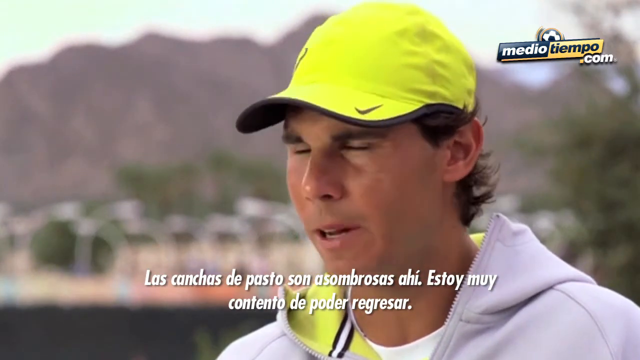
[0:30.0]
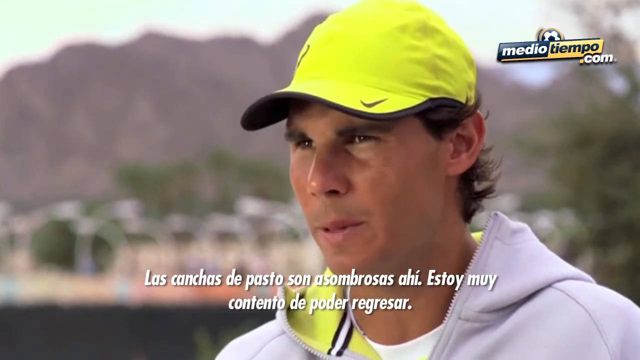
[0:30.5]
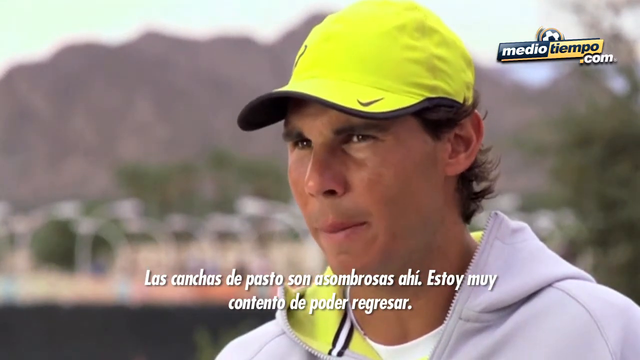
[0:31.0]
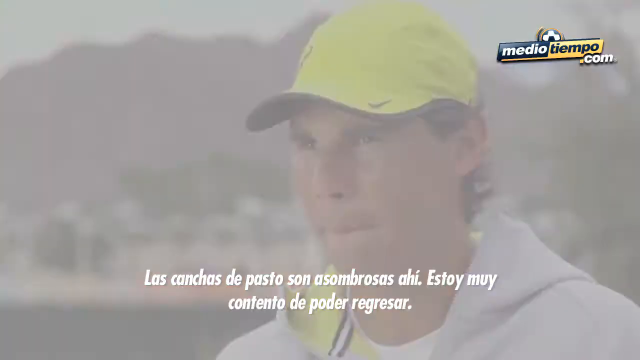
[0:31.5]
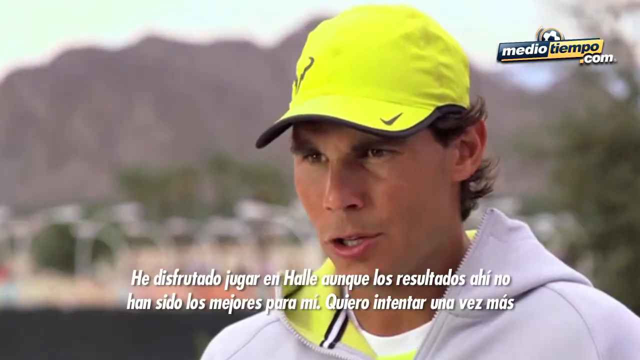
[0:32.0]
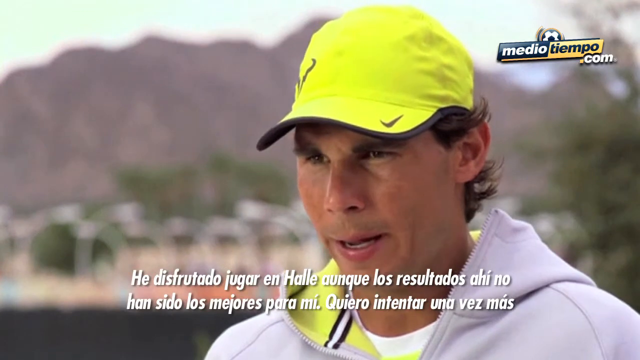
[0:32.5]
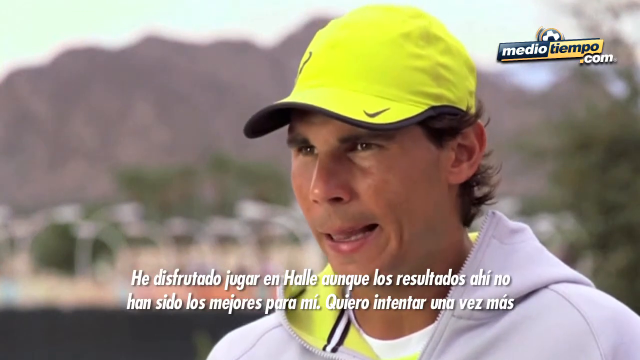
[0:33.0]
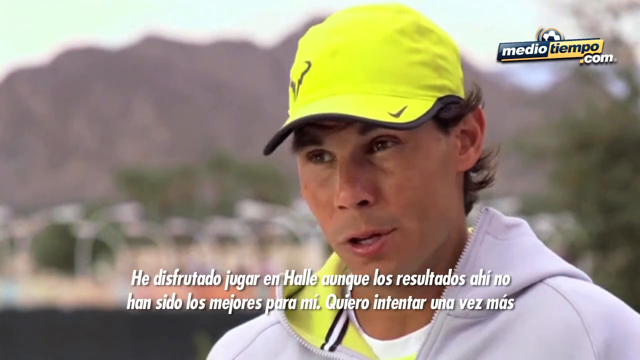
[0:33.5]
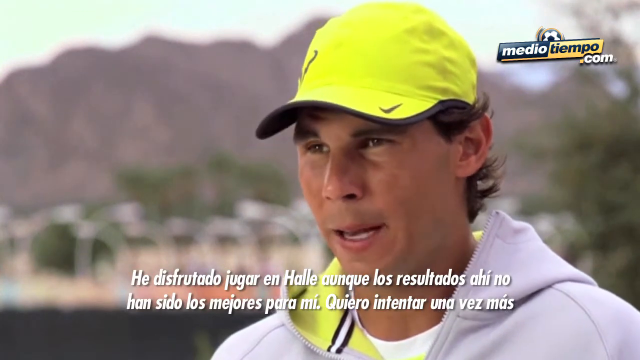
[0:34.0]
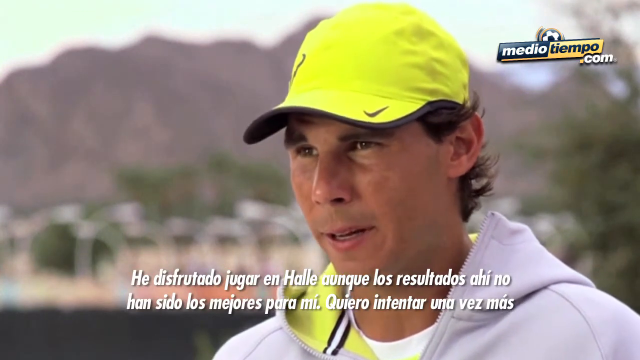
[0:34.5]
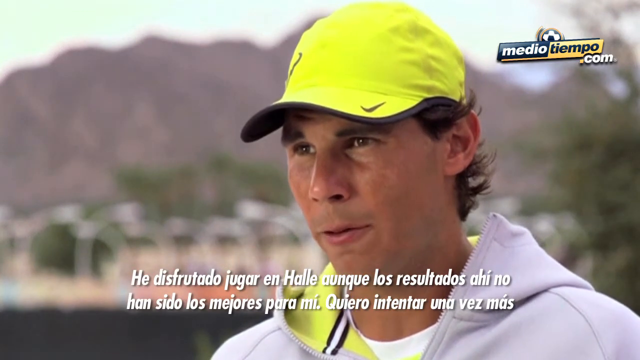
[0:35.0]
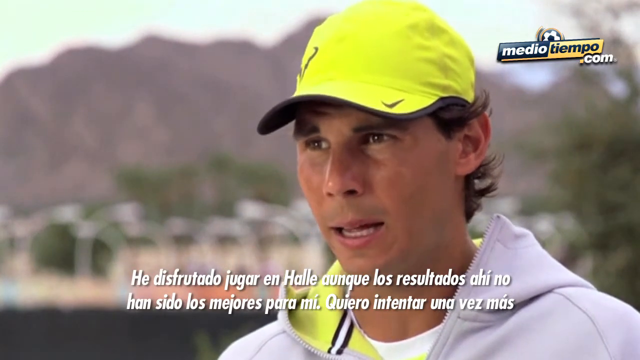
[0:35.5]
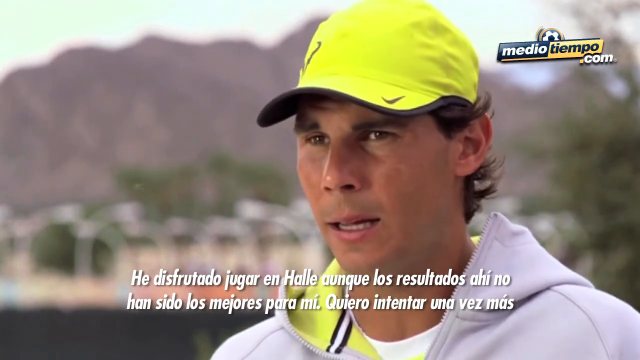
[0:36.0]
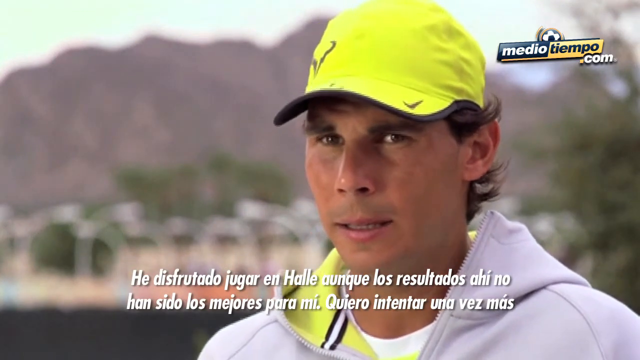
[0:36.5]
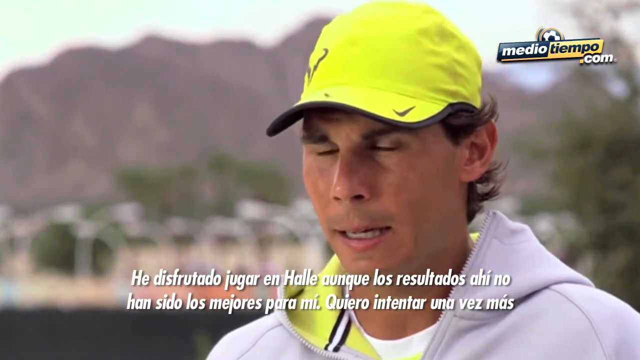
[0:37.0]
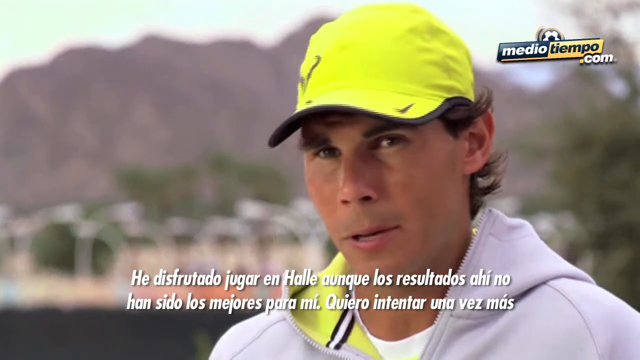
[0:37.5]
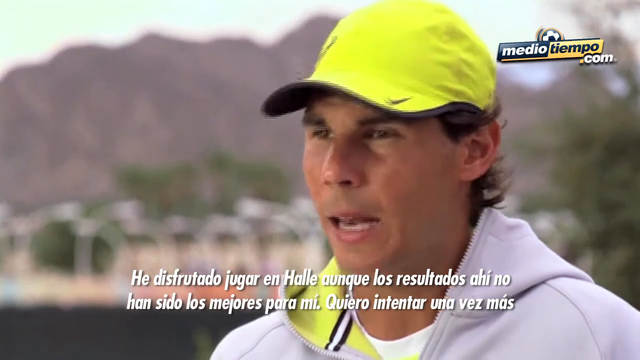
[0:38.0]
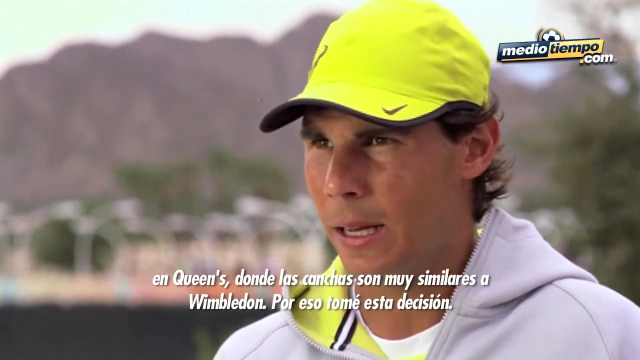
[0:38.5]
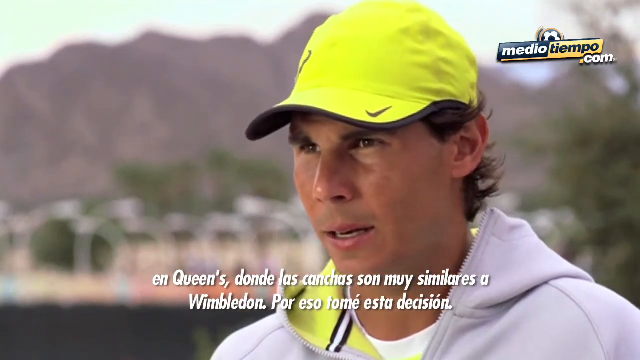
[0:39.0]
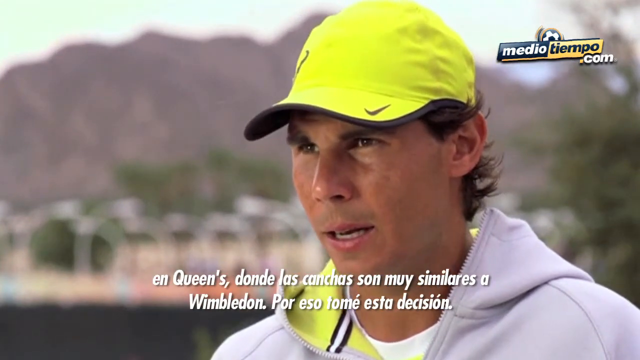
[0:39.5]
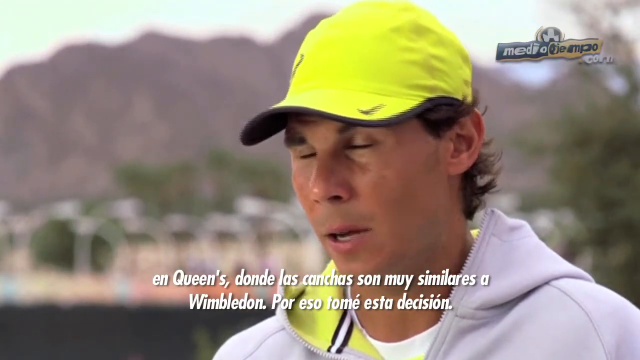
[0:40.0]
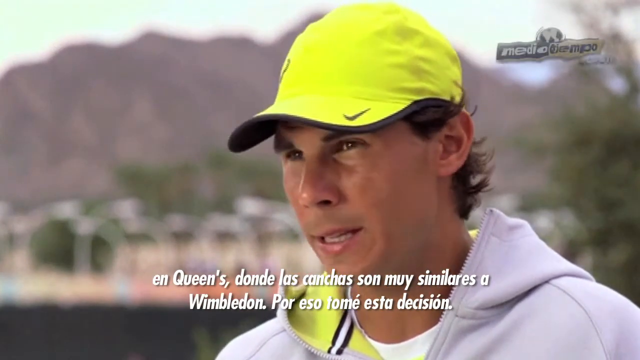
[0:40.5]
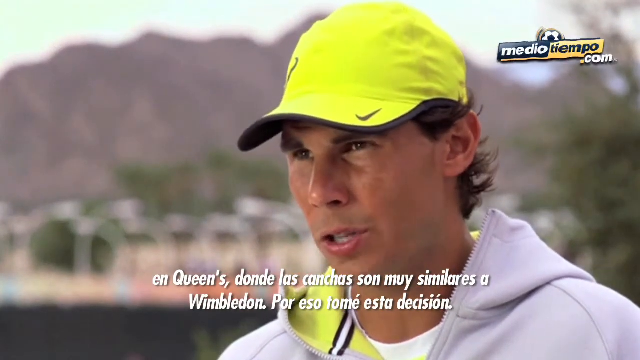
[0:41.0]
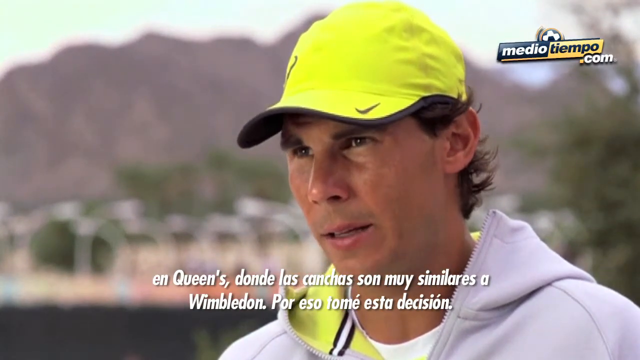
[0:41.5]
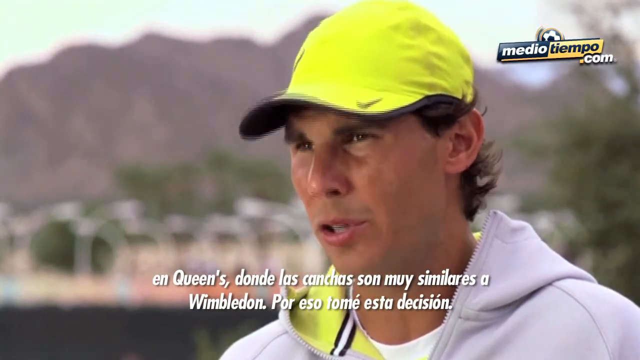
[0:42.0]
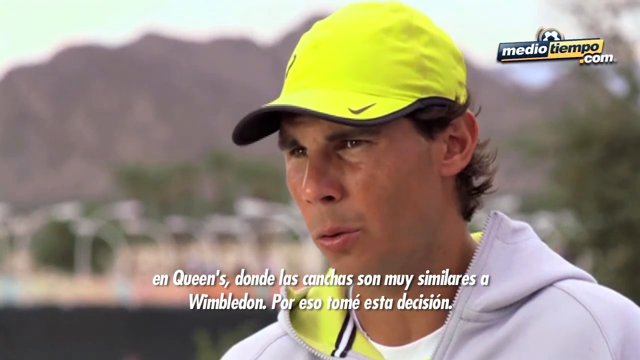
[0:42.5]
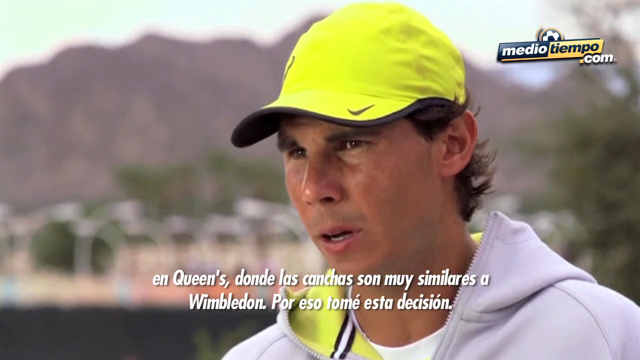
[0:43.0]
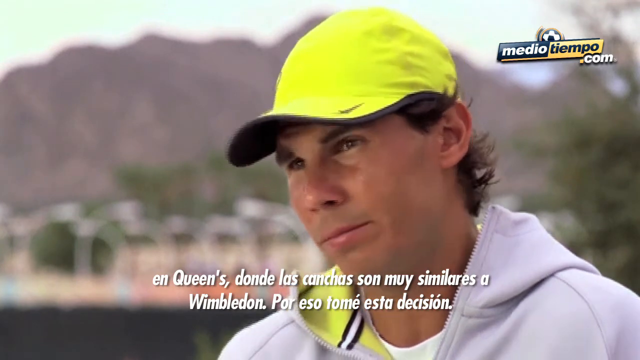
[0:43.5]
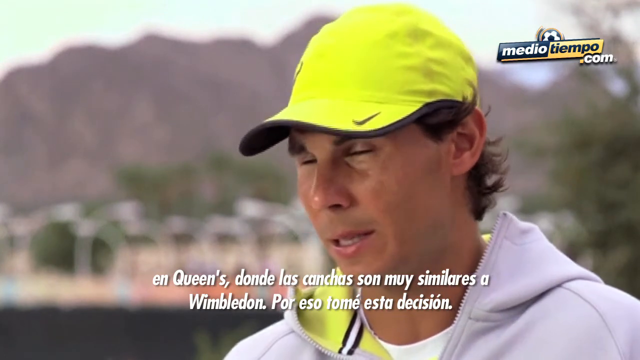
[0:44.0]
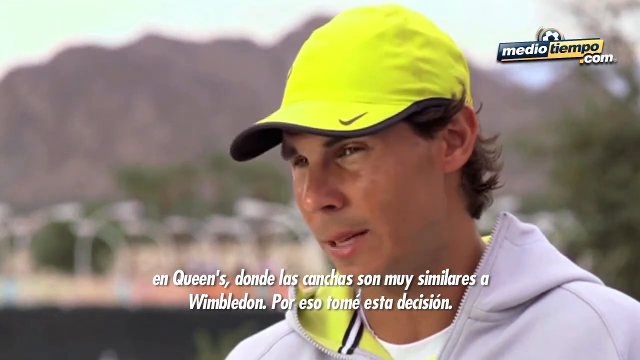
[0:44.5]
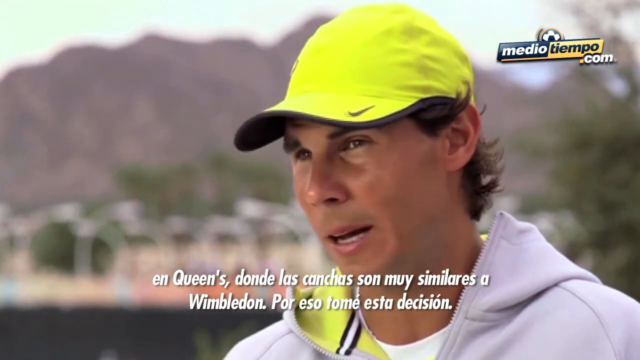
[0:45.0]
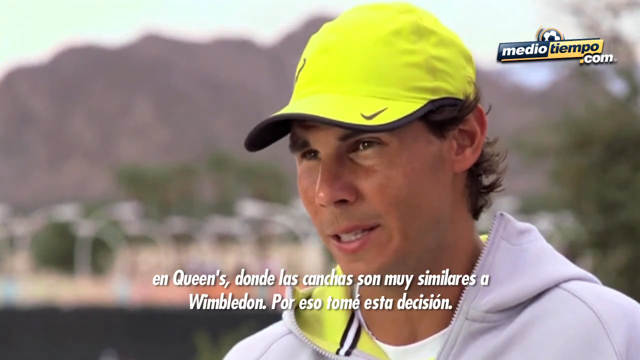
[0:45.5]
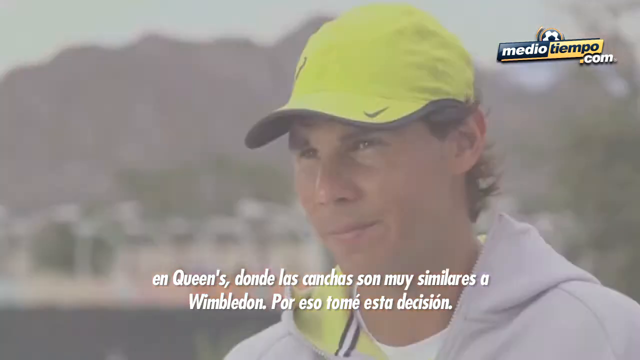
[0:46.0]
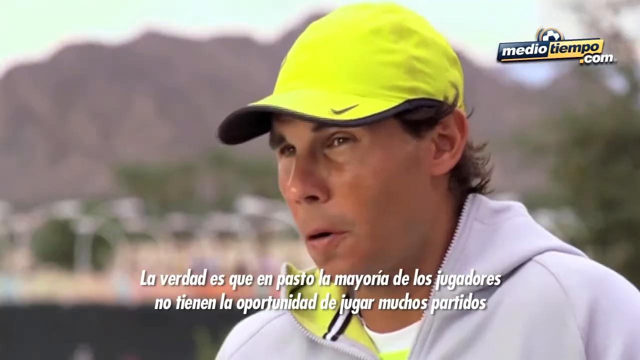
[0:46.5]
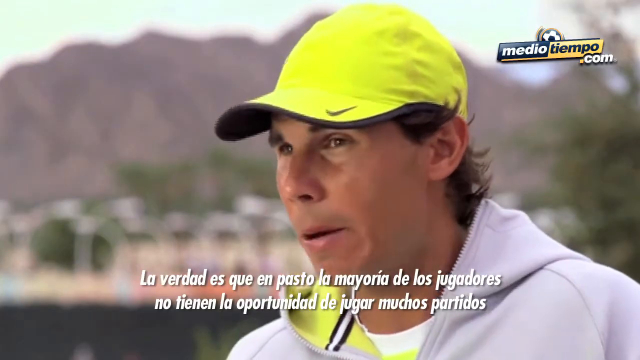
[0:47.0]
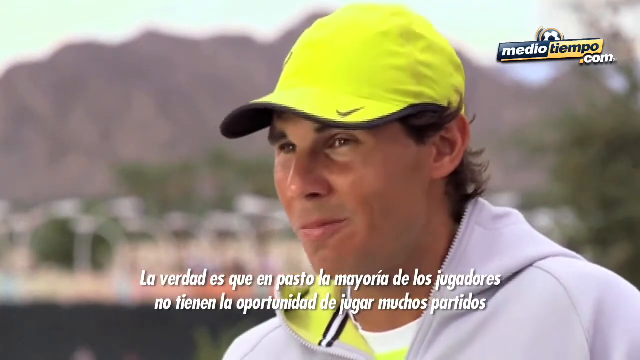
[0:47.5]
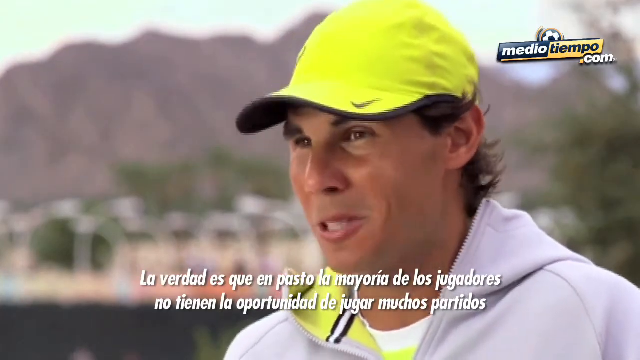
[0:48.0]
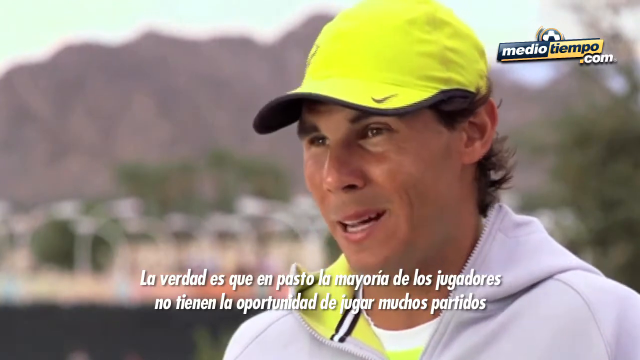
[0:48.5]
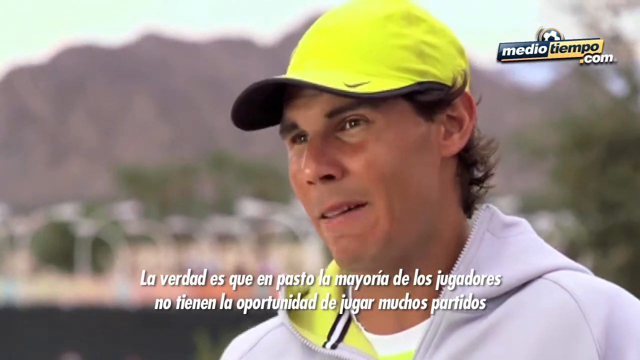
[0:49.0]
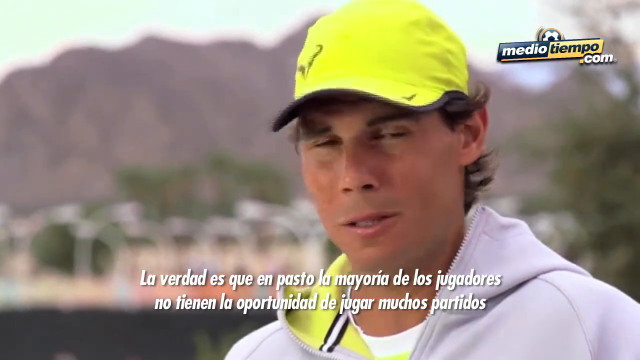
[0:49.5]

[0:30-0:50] Nadal continues giving an interview. He wears a fluorescent yellow hat with a Nike logo, the underside of its brim black. He has dark curly hair and wears a gray hooded sweatshirt whose hood is lined in fluorescent yellow to match the hat. The background is a blurred, daytime desert-looking scene with lights from a parking lot, perhaps palm trees or some sort of trees, and a mountain range in the distance. He speaks to an interviewer, and the video hard cuts to another segment that is still part of the interview. A Spanish caption runs along the bottom of the screen while he talks.